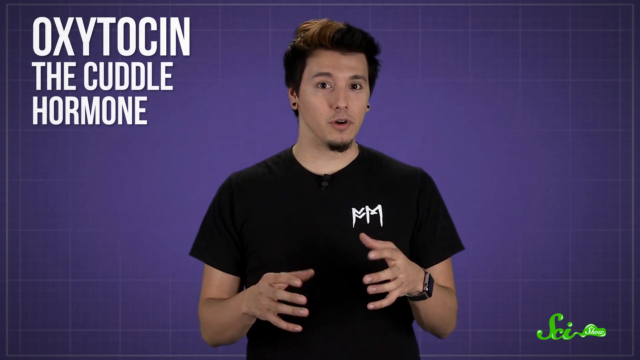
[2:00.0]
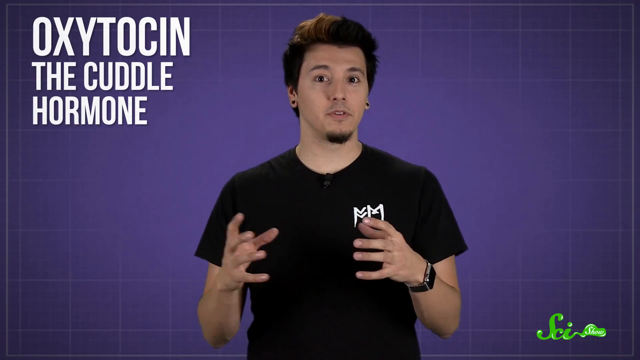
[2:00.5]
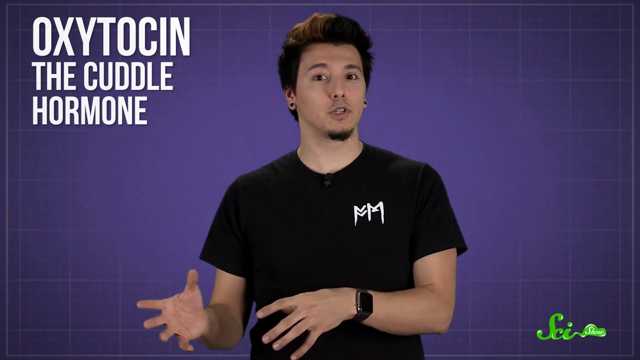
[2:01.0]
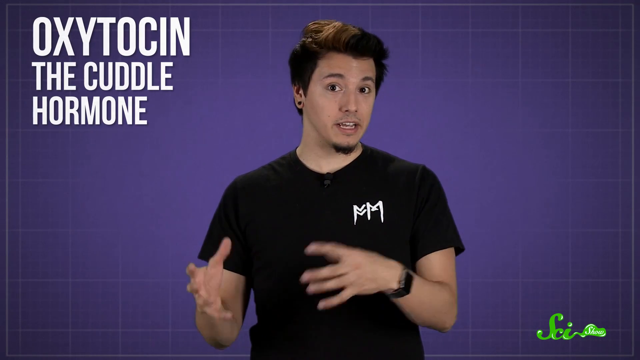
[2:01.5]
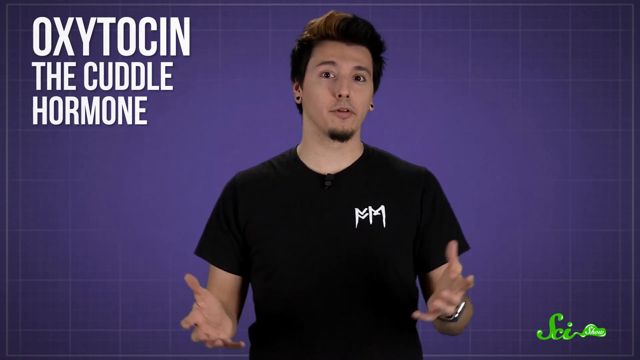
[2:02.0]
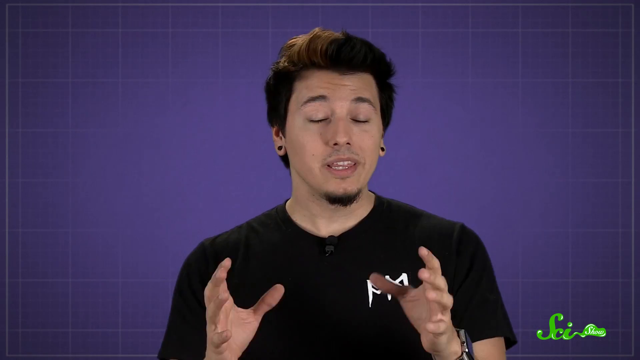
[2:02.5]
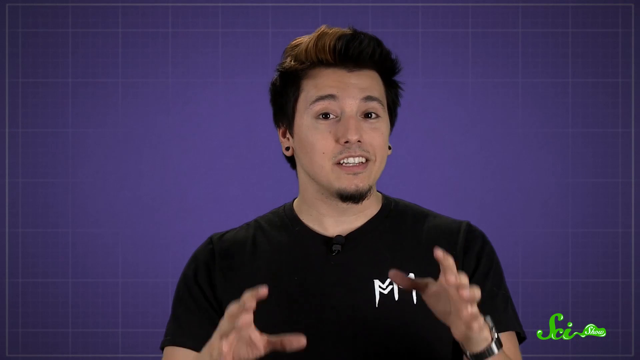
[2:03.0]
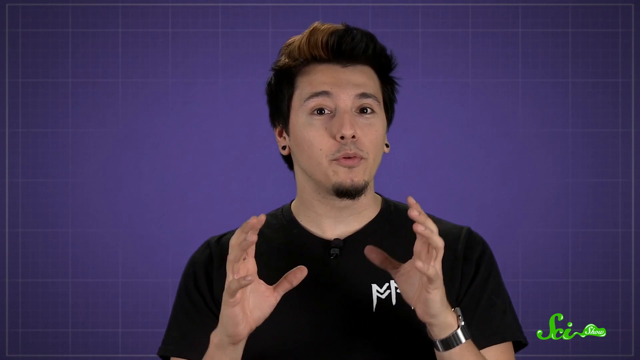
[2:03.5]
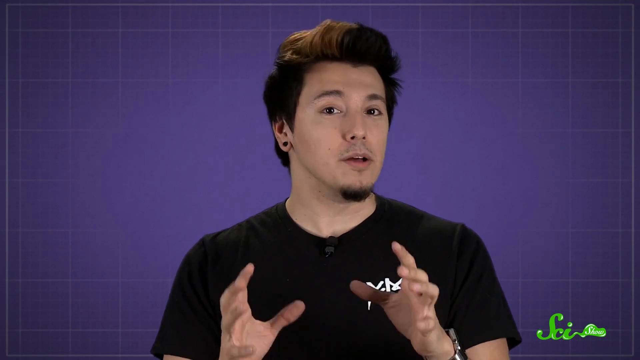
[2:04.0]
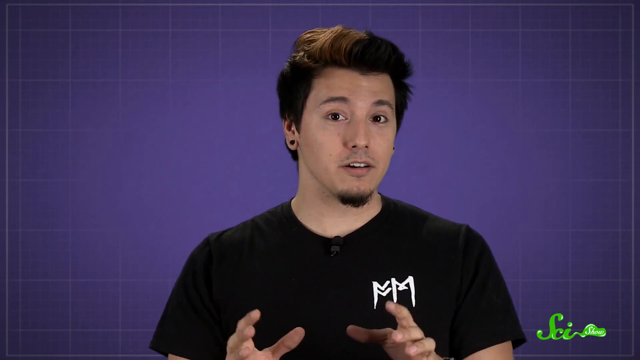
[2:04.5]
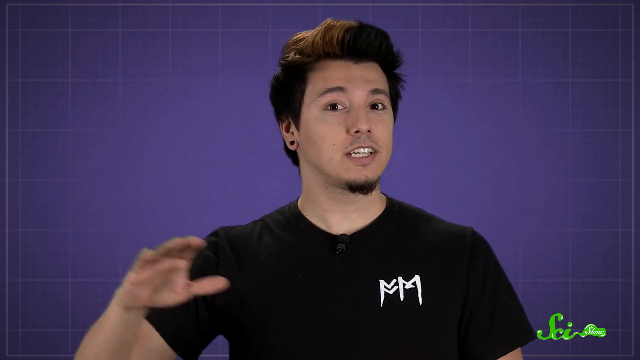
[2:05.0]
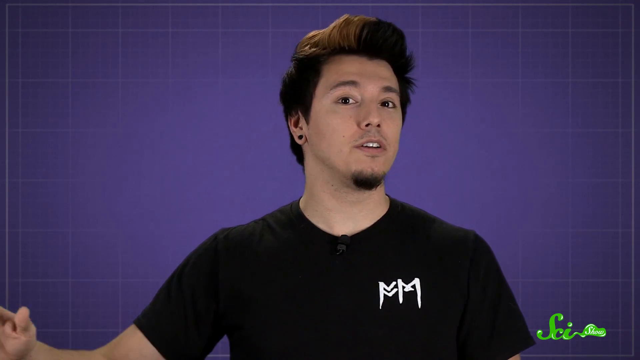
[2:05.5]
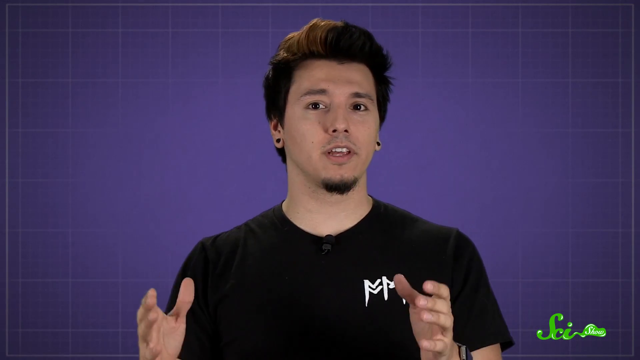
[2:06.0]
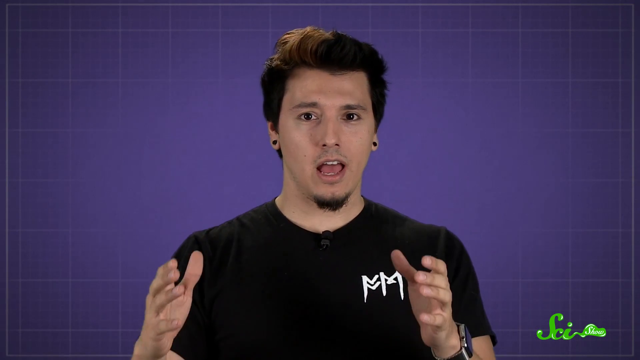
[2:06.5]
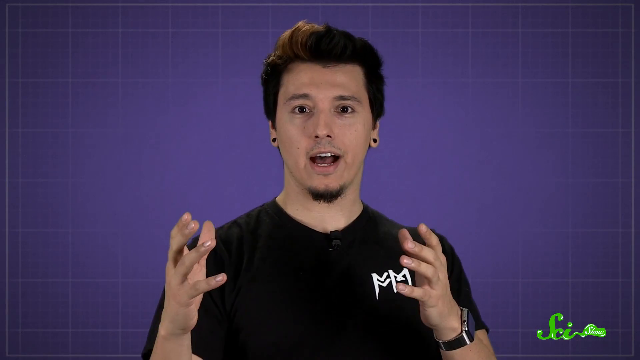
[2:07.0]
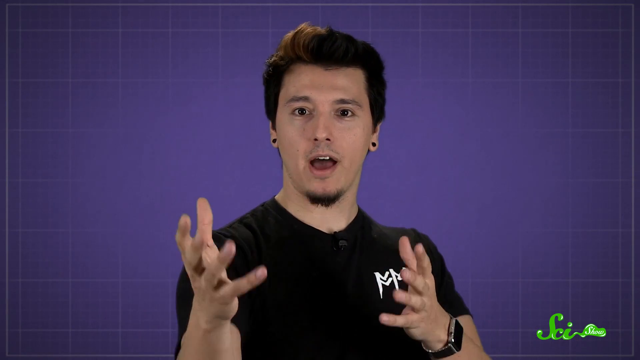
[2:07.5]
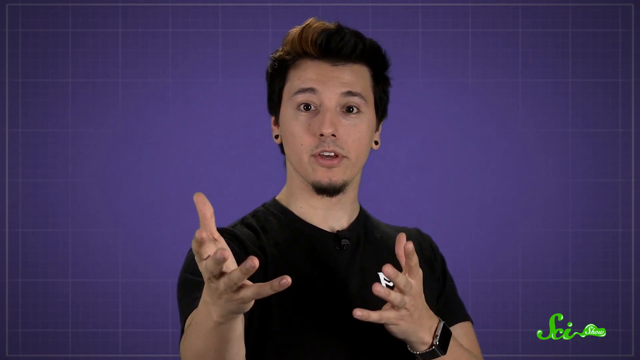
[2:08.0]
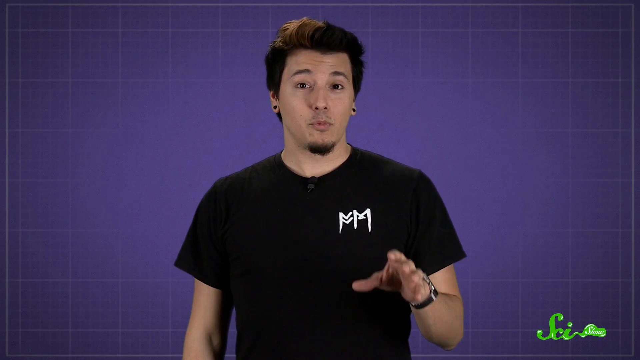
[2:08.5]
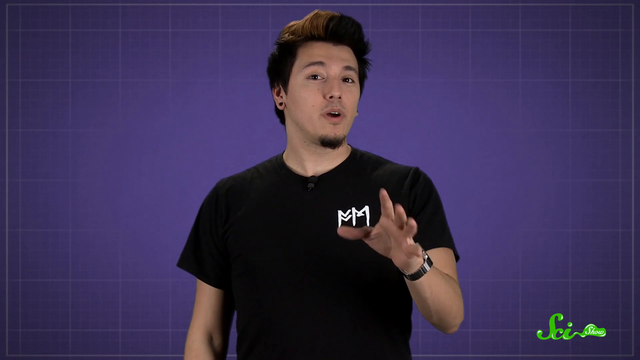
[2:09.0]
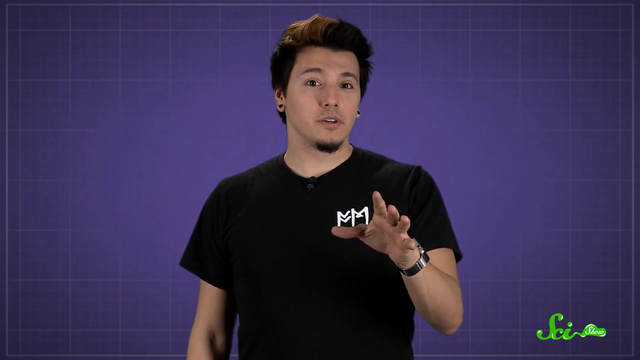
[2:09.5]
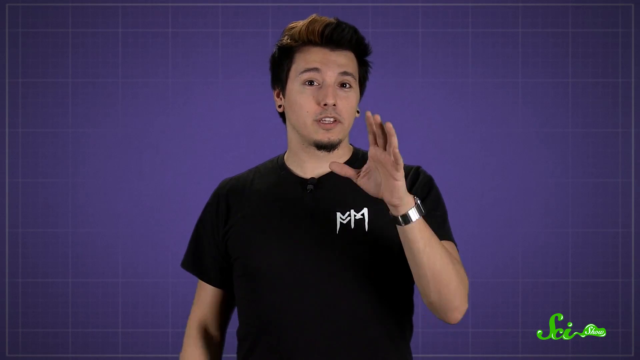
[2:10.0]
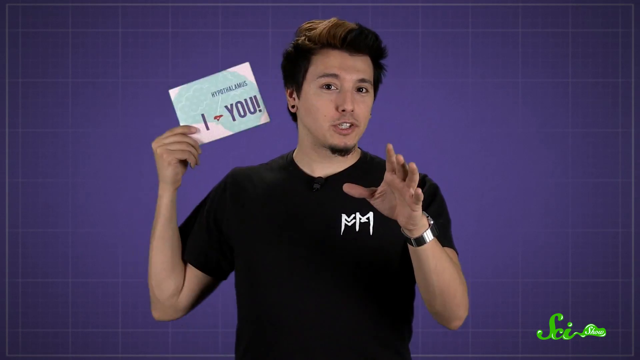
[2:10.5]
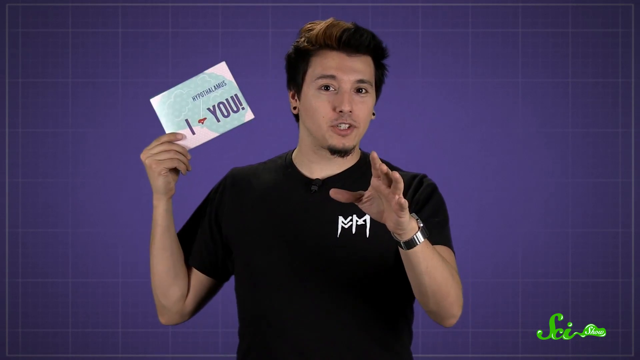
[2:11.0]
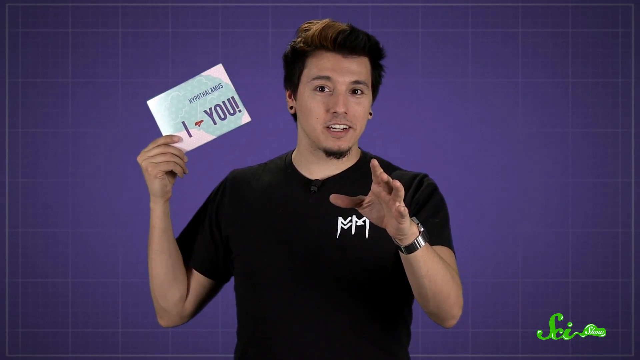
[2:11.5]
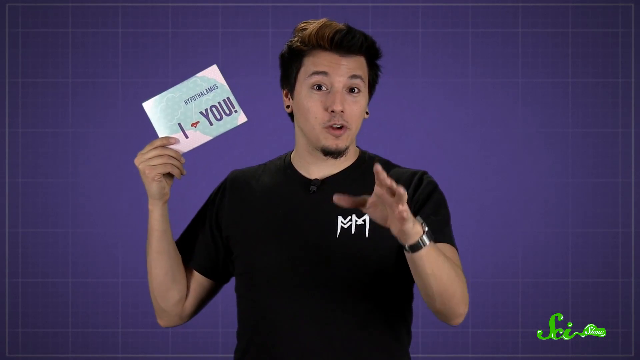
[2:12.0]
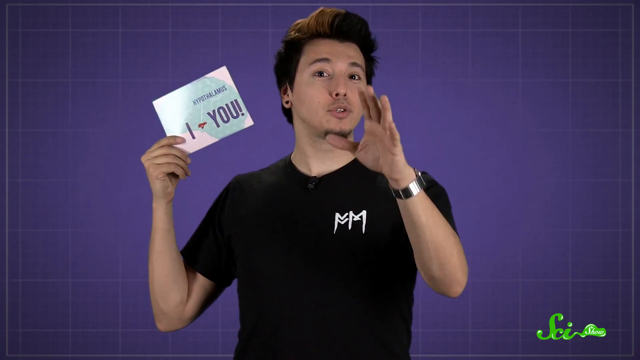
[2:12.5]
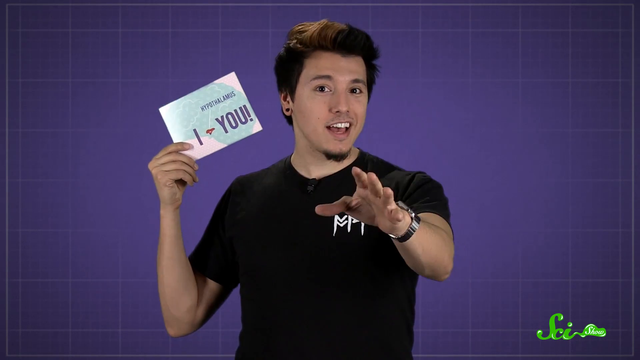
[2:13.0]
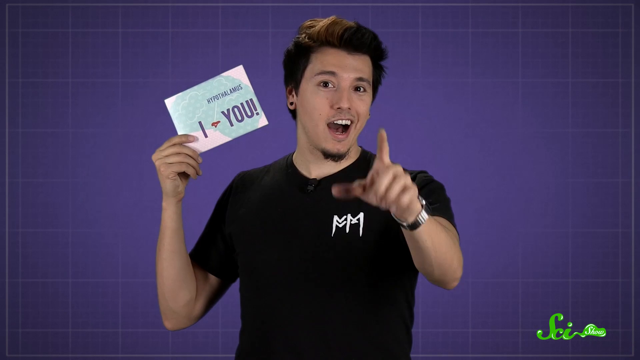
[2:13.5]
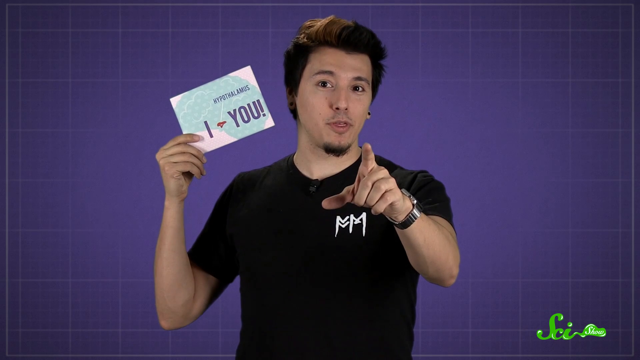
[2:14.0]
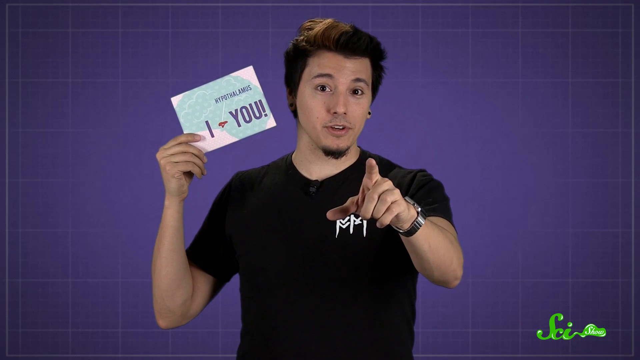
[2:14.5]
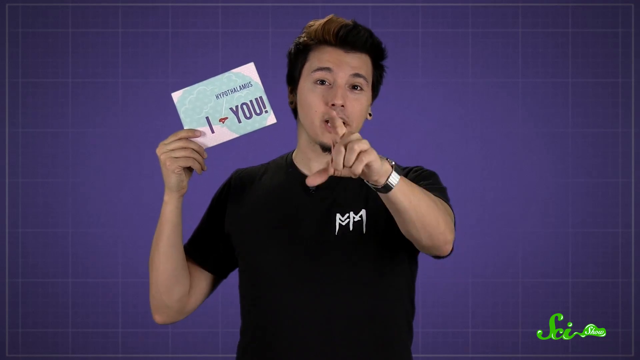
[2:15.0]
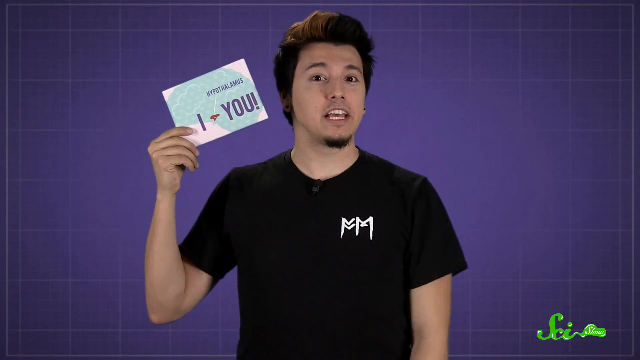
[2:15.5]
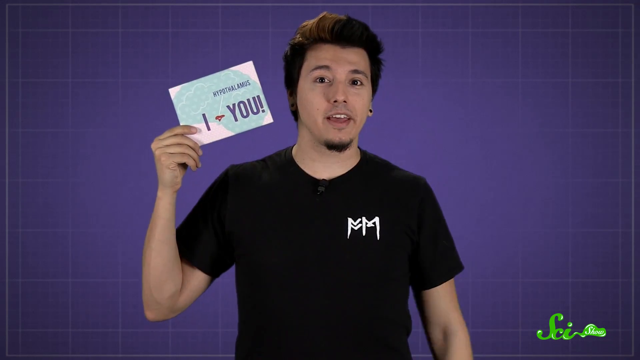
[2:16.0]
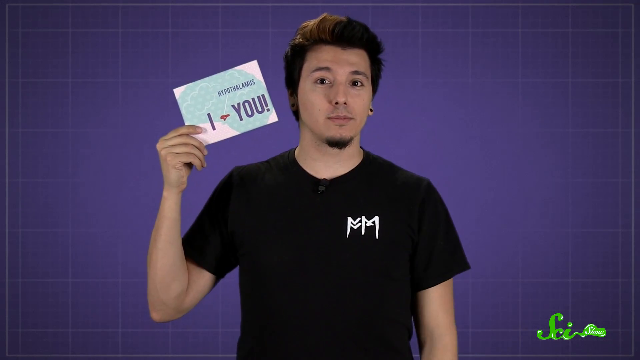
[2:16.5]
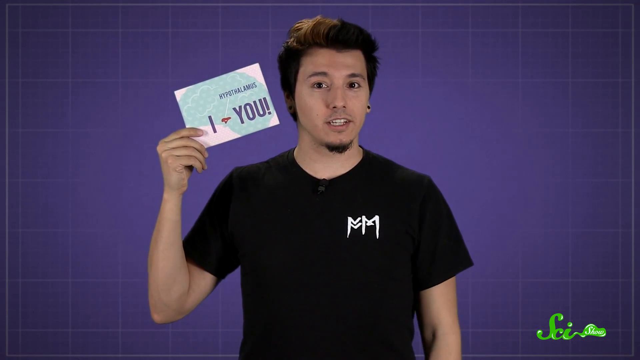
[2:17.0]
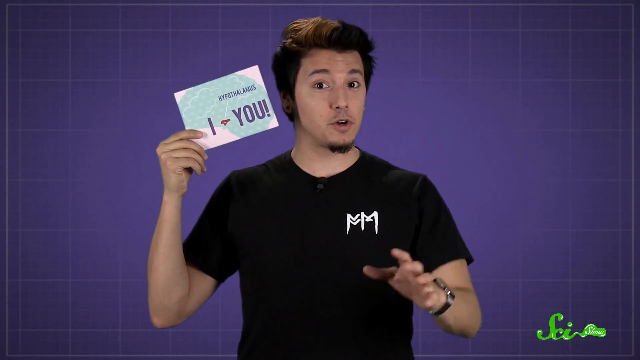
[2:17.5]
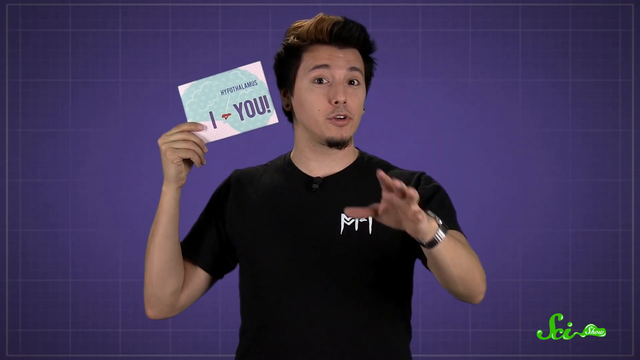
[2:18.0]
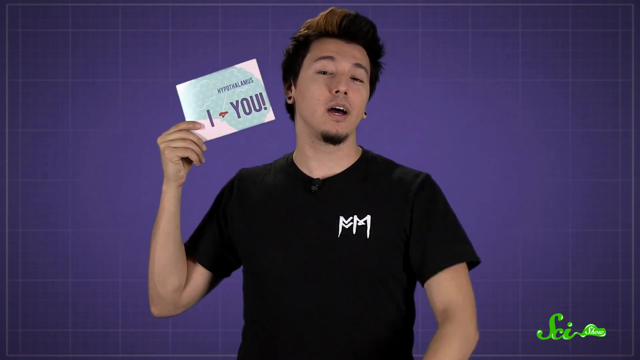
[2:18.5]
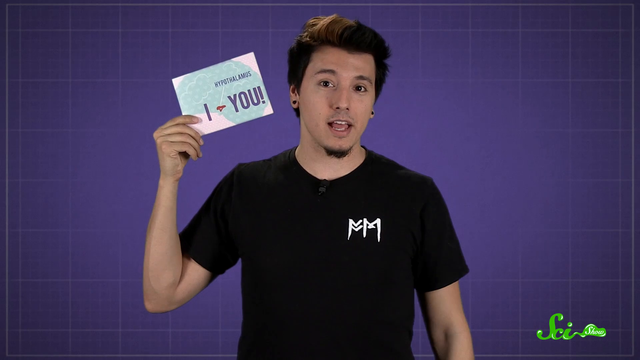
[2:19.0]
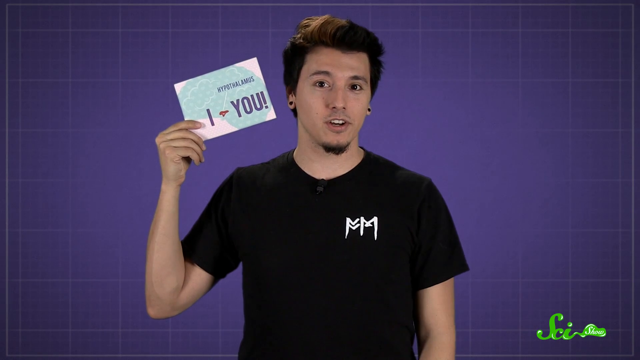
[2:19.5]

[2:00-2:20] A young man wears a black T-shirt with two white letters on it that look like the letter M. In the upper left corner of the screen, white capital-letter text reads "oxytocin, the cuddle hormone." The young man is speaking; he has a small black goatee, thick black hair and black stud earrings. The text in the upper left slides off the left side of the screen in an animated effect. The young man continues to speak, gesturing dramatically with his hands. He then raises a white and green card that says "I love you" in his right hand. Still holding the card up right beside his head with his right hand, he points at the camera with his left hand as he continues to speak.